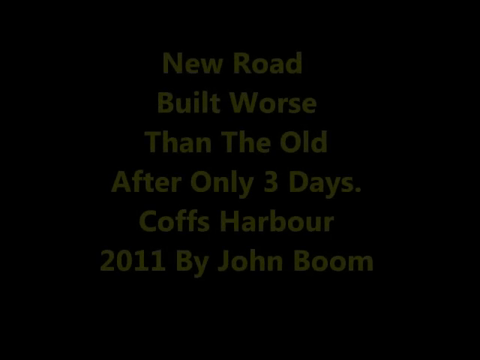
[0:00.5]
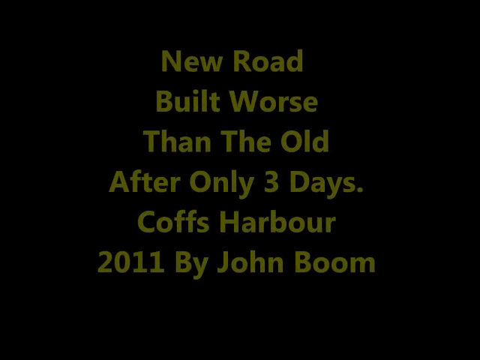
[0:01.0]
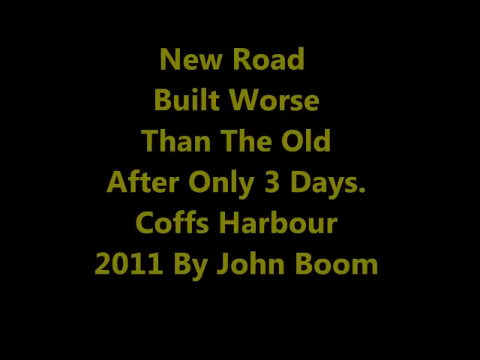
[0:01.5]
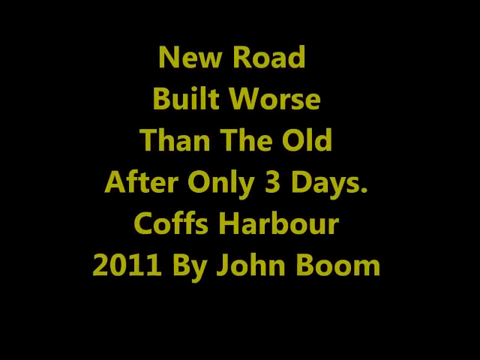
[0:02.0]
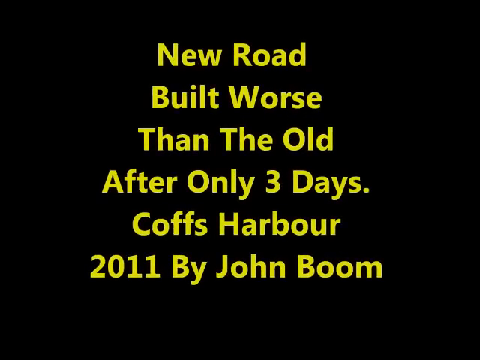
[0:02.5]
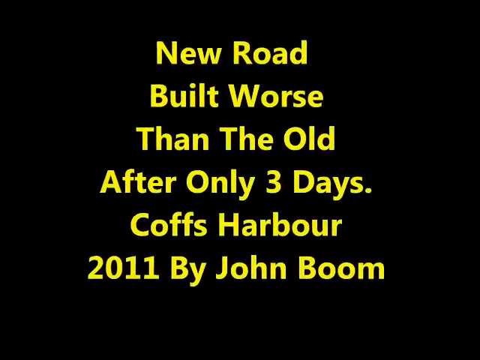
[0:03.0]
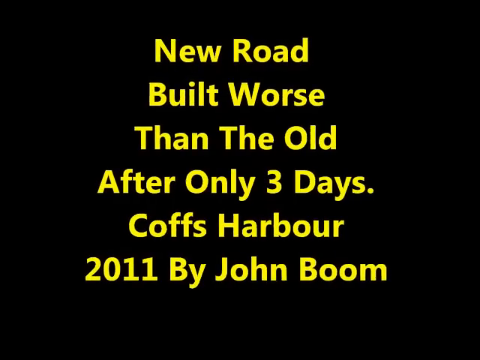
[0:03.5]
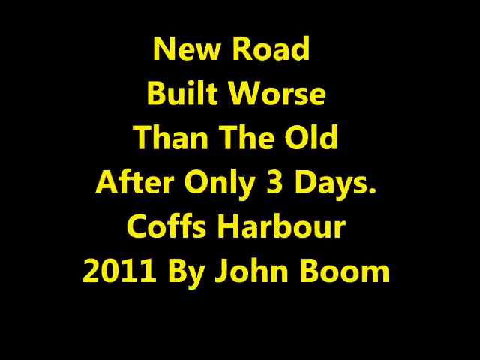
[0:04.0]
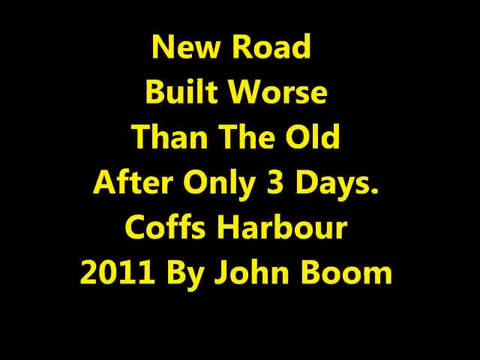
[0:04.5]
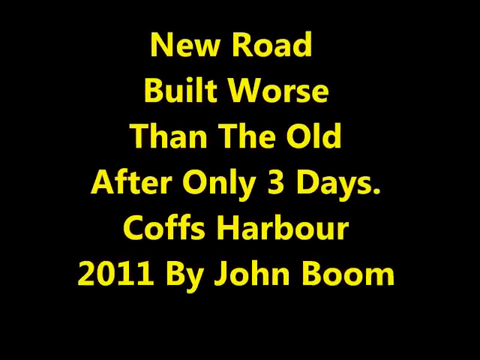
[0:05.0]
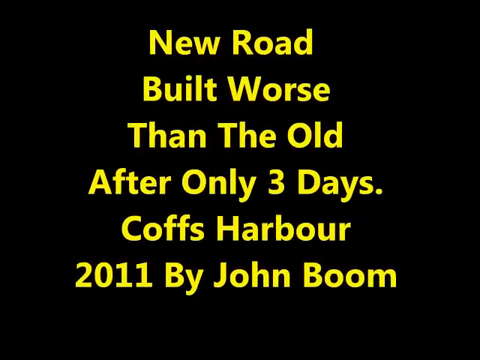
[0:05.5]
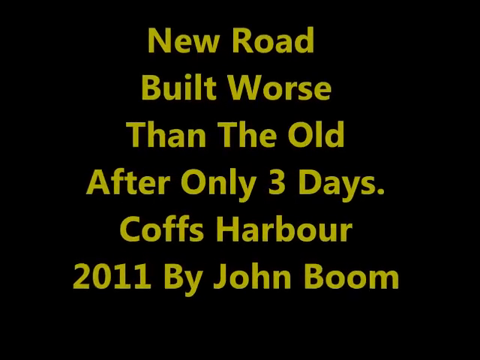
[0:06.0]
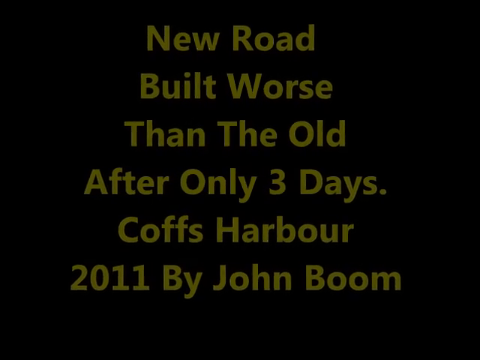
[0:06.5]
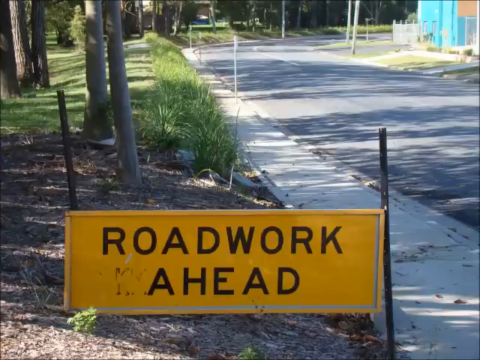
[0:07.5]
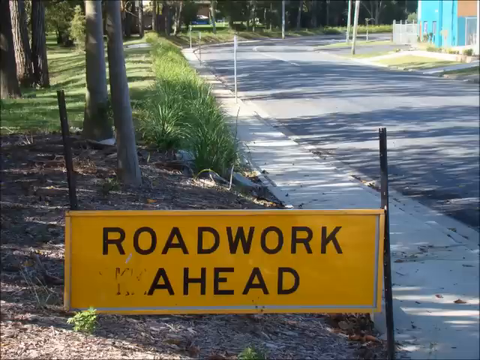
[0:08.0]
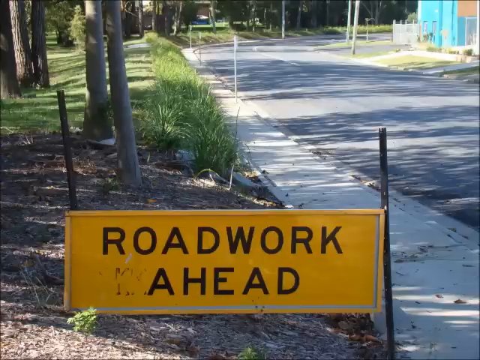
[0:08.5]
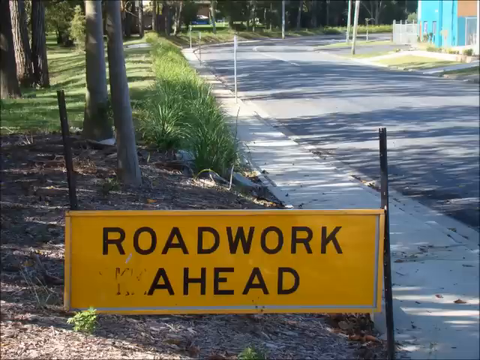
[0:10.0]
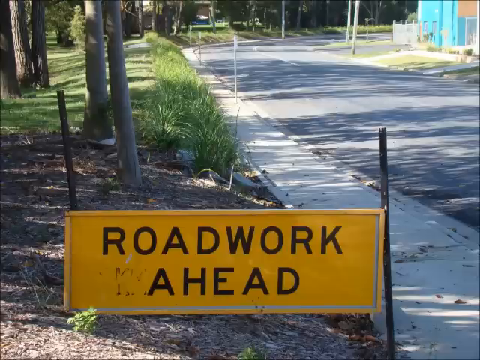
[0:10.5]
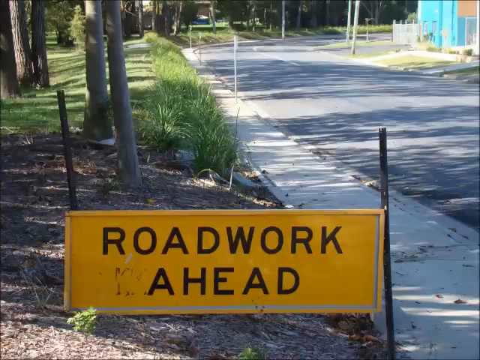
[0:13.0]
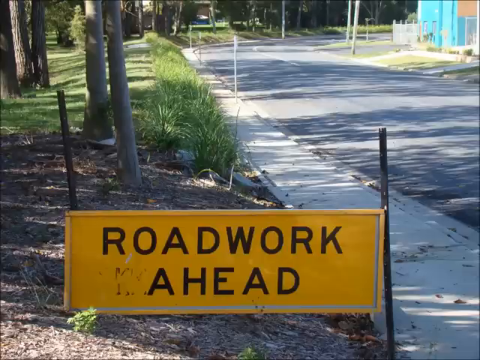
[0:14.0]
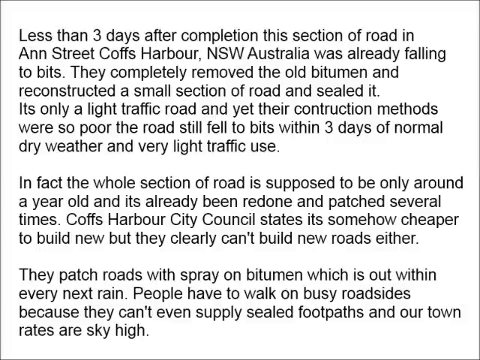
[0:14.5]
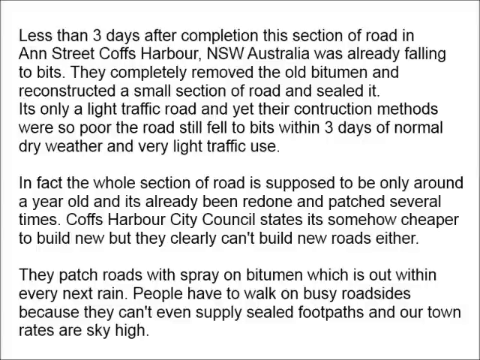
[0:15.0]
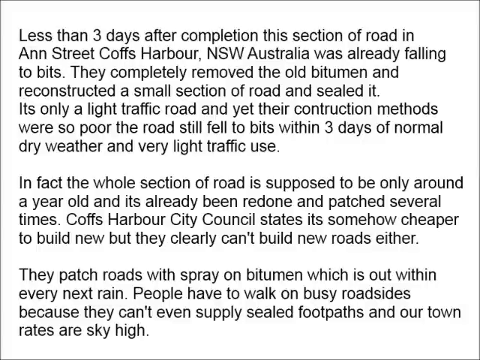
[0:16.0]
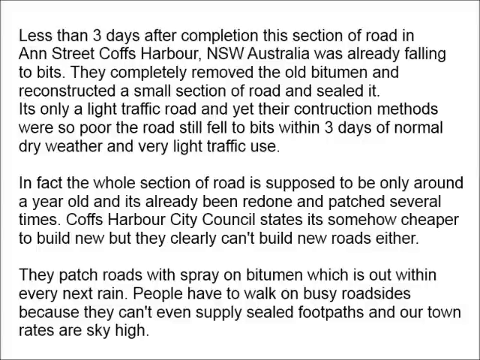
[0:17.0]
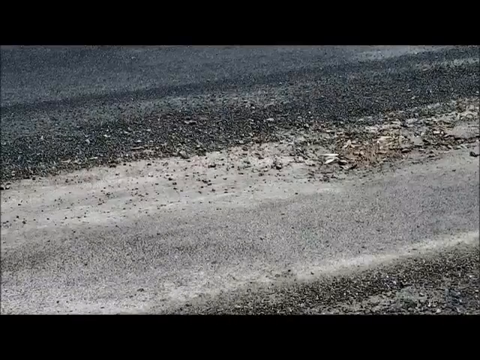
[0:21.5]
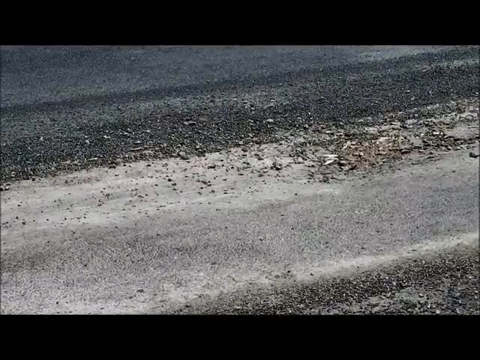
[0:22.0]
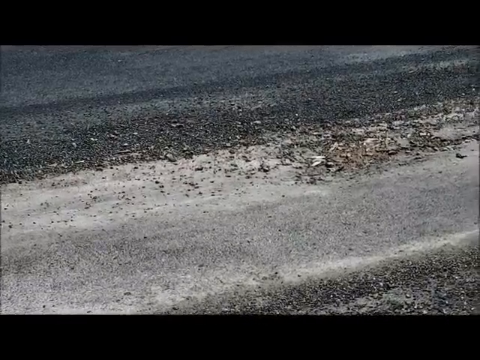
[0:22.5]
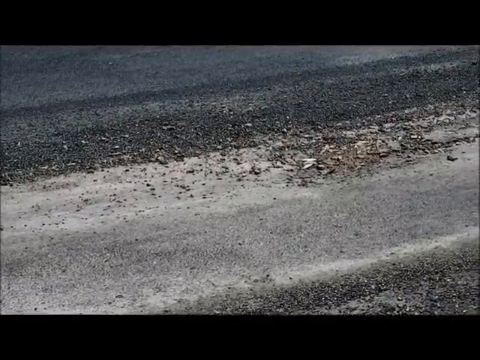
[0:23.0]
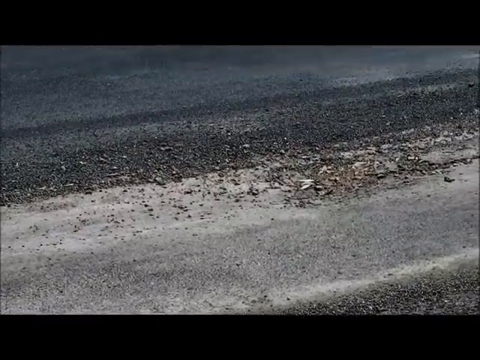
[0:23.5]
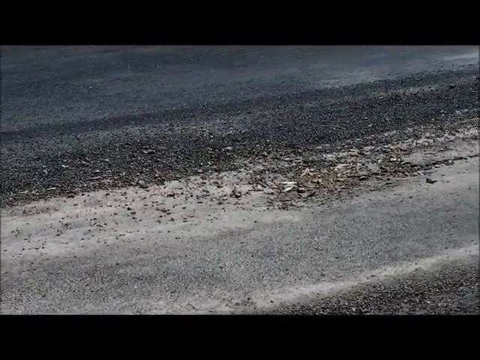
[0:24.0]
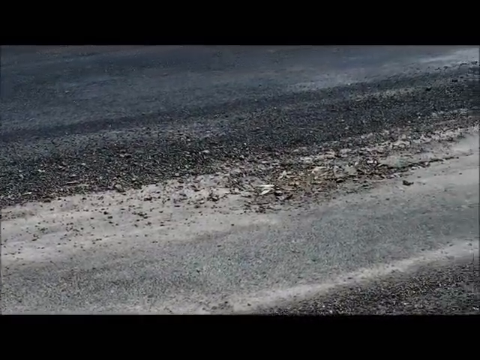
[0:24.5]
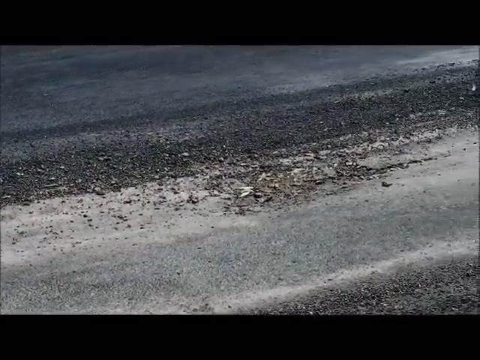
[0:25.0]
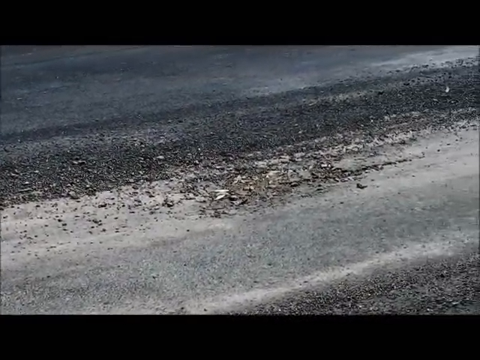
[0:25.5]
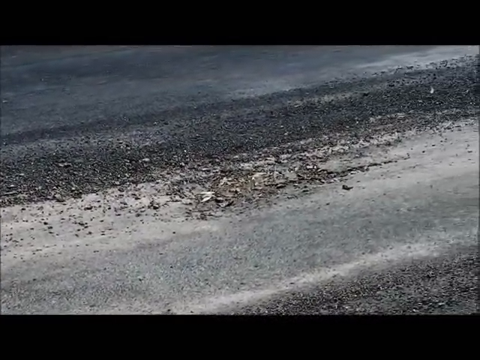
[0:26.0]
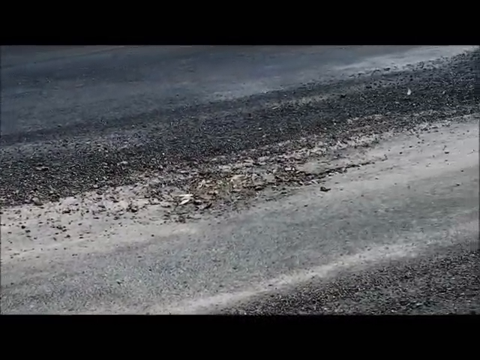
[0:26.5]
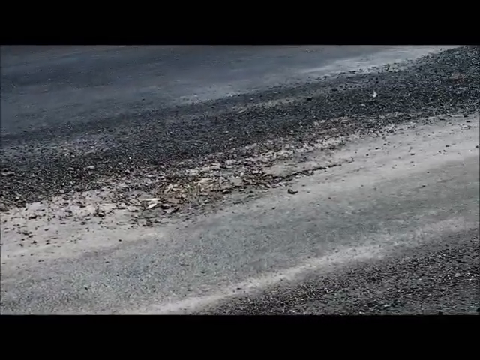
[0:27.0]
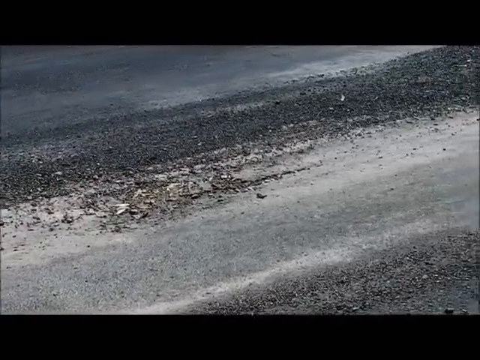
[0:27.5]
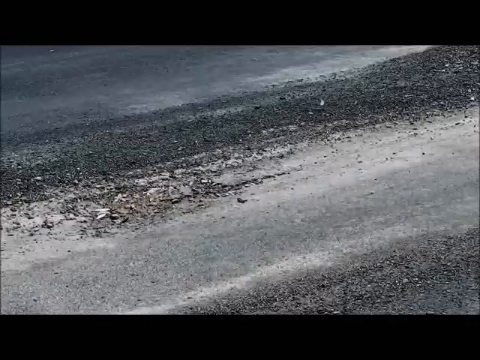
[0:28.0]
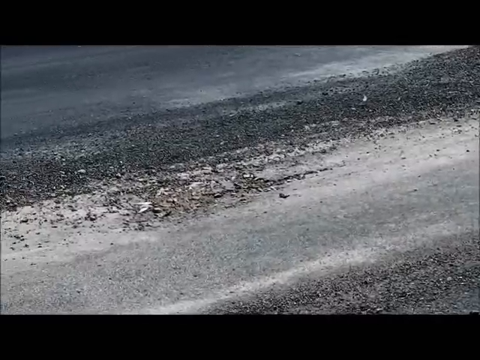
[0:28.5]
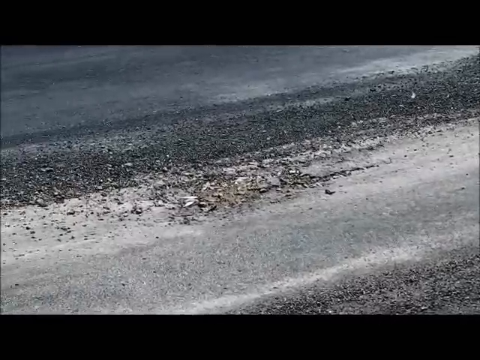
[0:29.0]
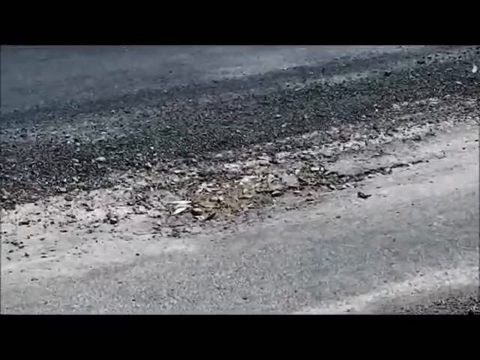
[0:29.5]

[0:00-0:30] Yellow captions appear in the middle of a black background. They read "new road, built worse than the old, after only three days. Coffs Harbor, 2011, by John Boom." The captions fade away, and a sign at the bottom says "road work ahead"; the sign is yellow and rectangular. In the distance, beyond the sign, a road on the right side curves to the right. On the left side there is some grass, some dirt and some trees, and a light blue building is in the top right corner. Next comes a lot of black text on a white background. After the text, there is a close-up image of what looks like the road, with a lot of debris on it, like little specks of what looks like gravel: little pieces breaking from the road. The view is focused on the road and zooms in to show many small broken pieces of it.